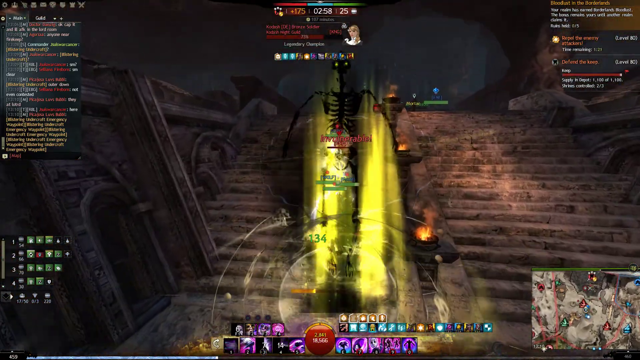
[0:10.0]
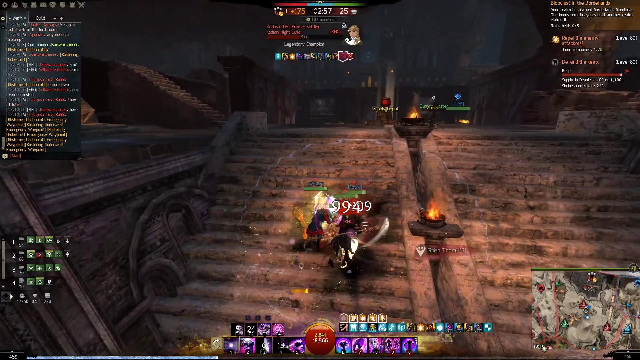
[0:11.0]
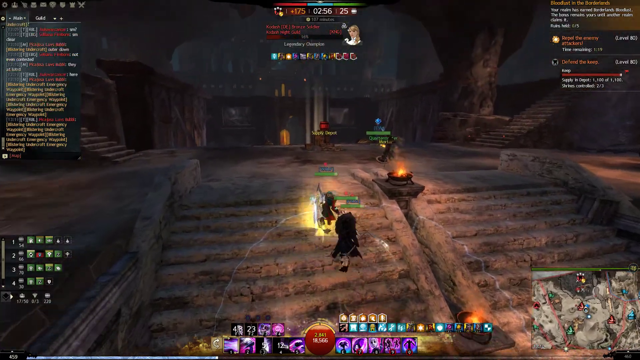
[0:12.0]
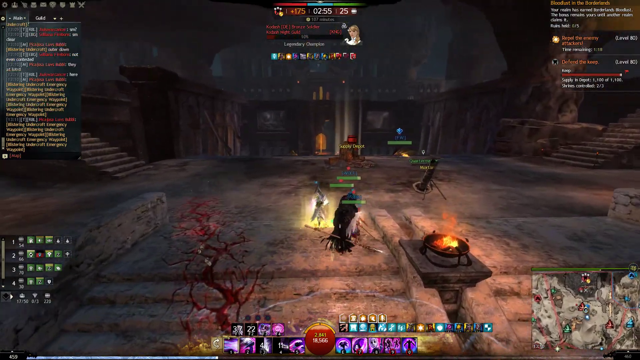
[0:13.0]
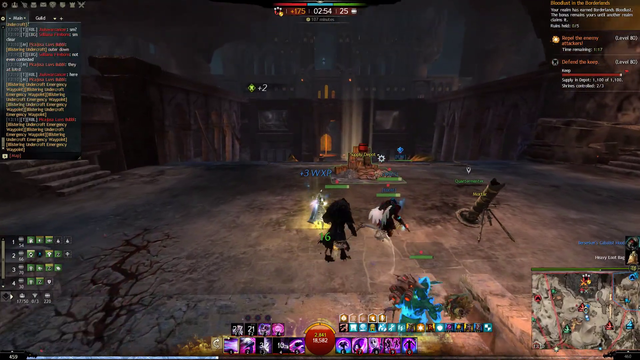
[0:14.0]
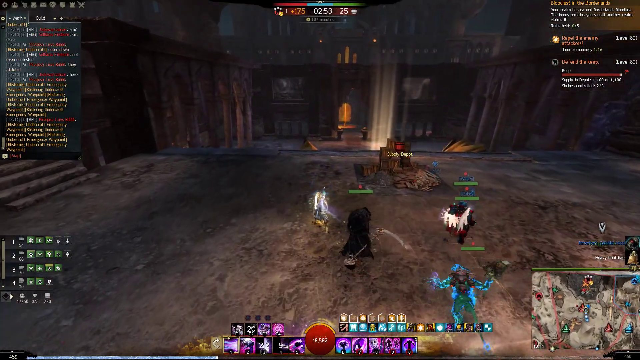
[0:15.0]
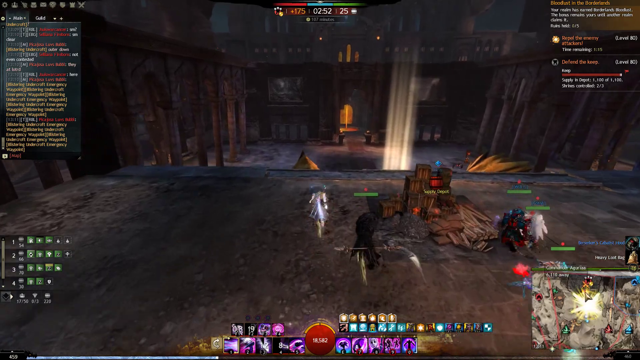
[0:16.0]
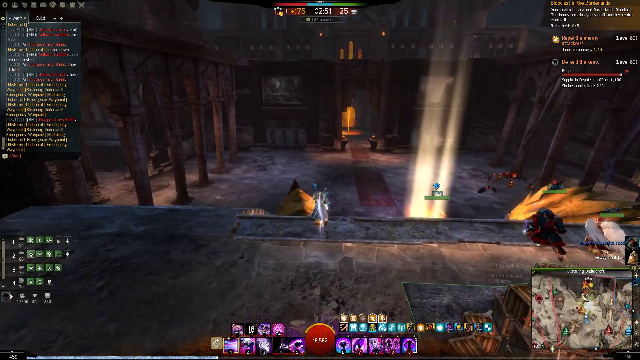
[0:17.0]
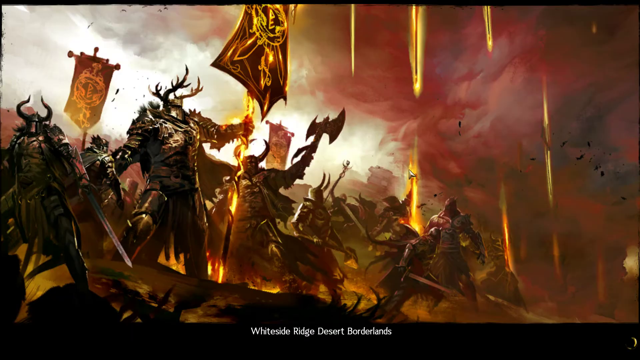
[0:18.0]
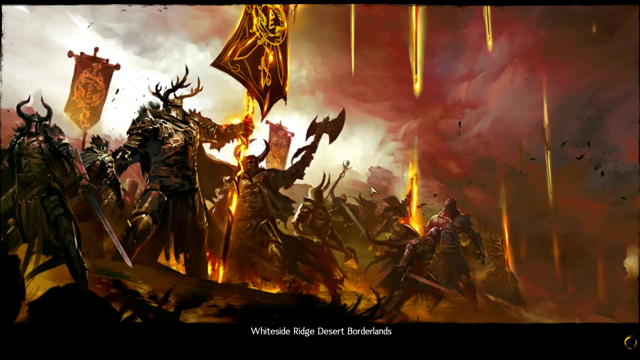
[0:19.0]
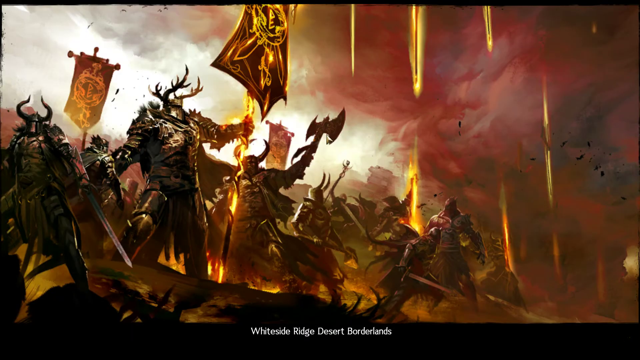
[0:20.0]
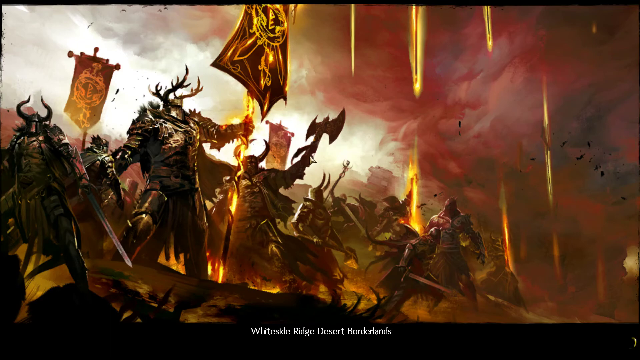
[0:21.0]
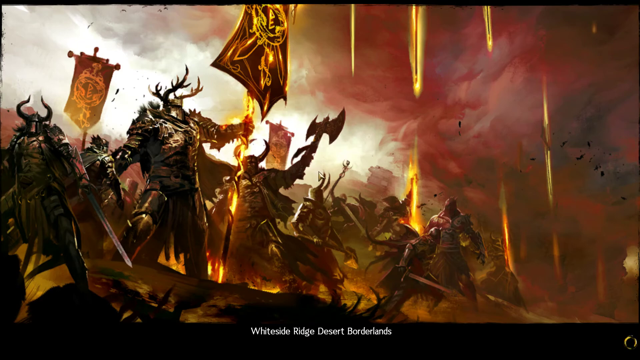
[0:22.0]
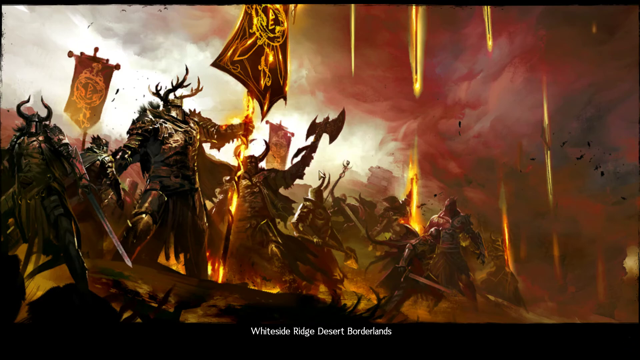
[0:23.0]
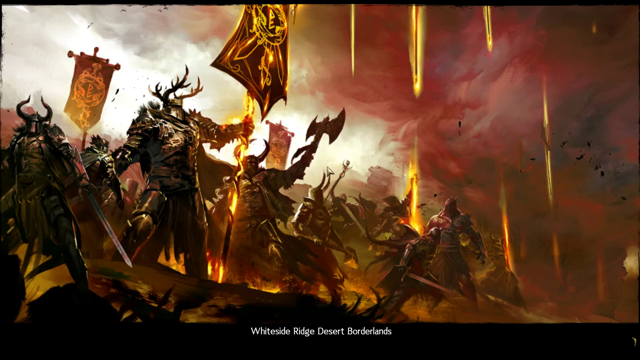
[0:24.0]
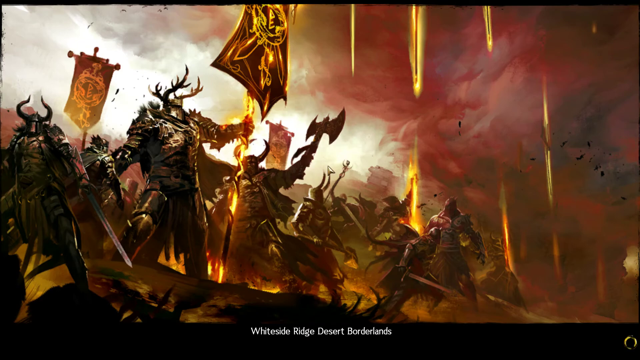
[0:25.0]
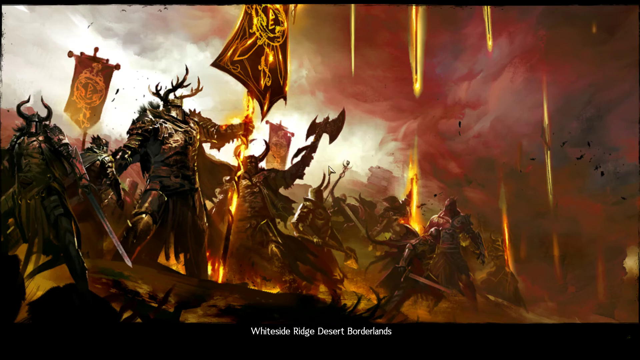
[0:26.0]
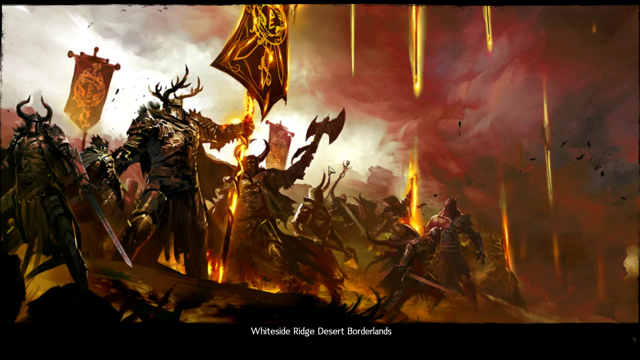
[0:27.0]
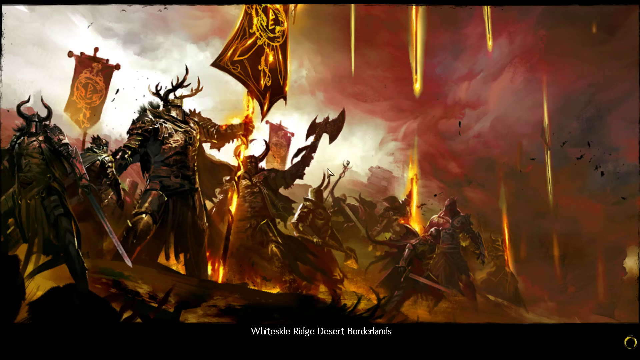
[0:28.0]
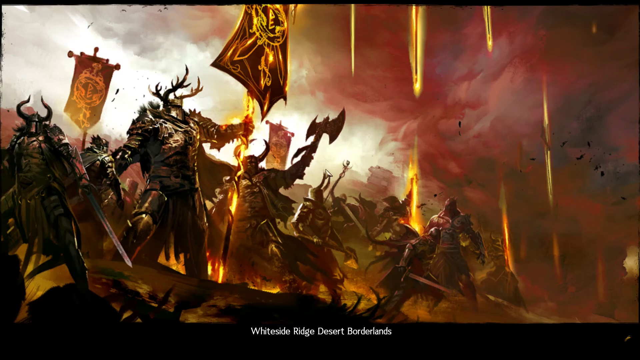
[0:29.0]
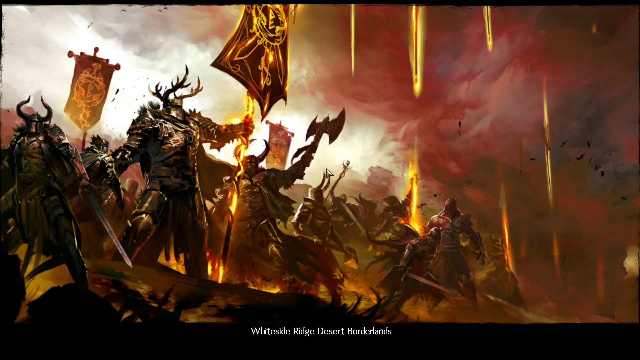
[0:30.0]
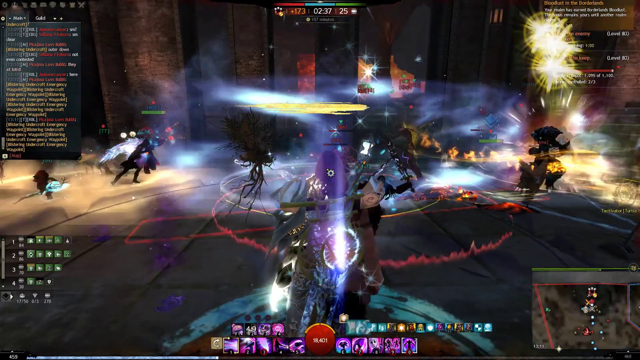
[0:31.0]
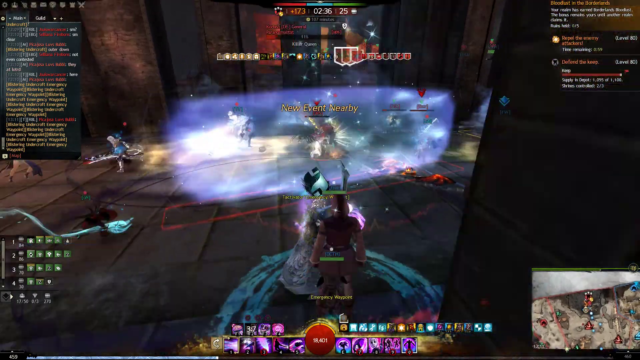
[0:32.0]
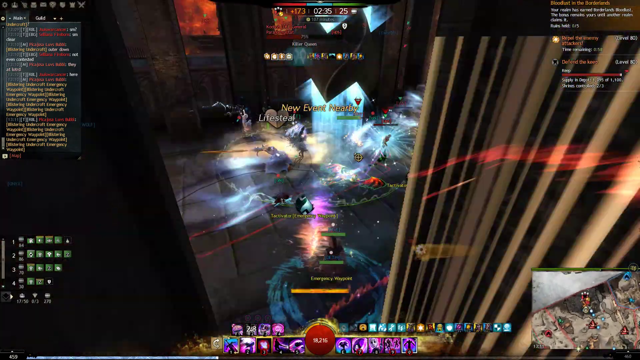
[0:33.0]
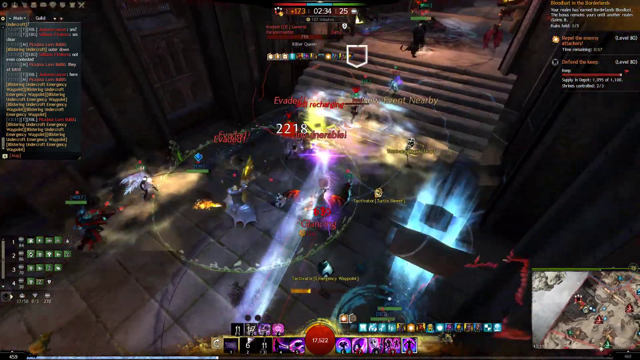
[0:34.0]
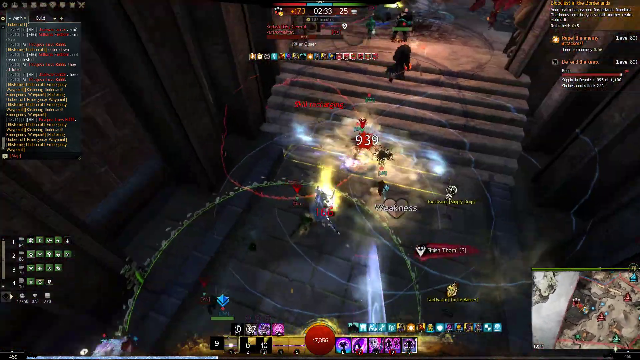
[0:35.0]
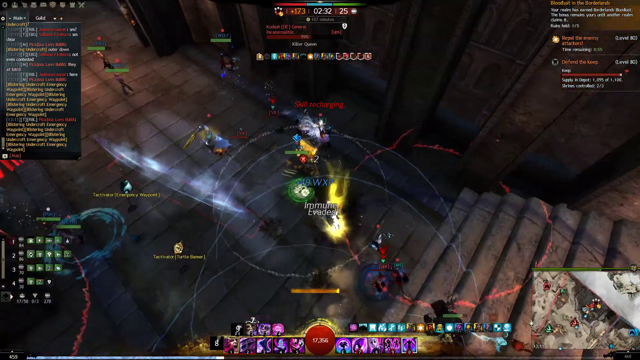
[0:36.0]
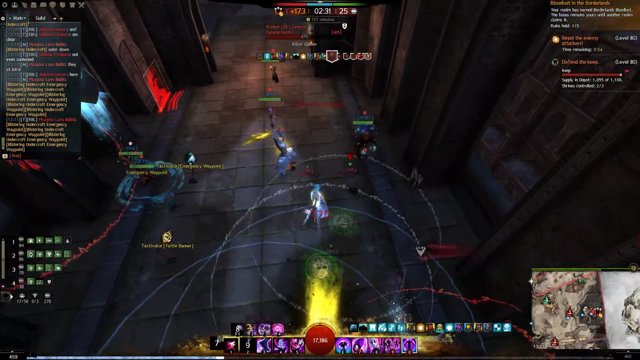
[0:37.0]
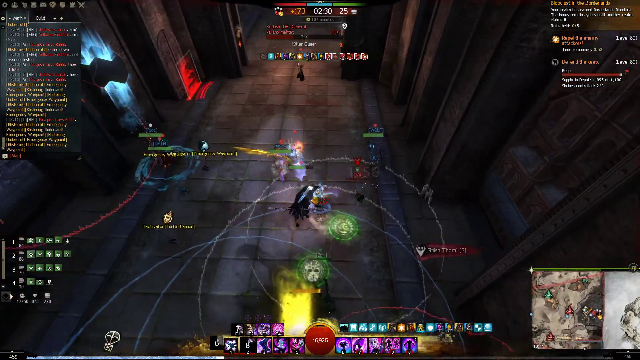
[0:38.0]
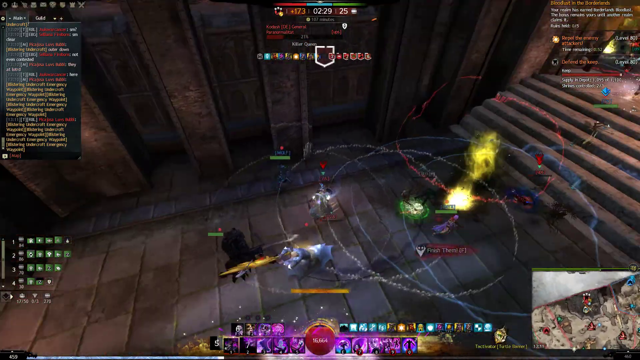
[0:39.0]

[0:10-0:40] In this gameplay, characters run through a large cavernous area that looks like it could be inside or underneath a large castle. Writing at the bottom of the screen reads "White Side Ridge" before the video transitions on. The characters run through the castle battling people. Later, writing at the bottom of the screen says "White Side Ridge, Desert Borderlands", and a number of the game's playable characters are shown behind the text. They look like ancient Viking characters carrying huge swords, huge battle axes and other weapons, and they appear to be wearing armor and helmets with horns coming out of the top. A game map is in the lower right part of the screen.